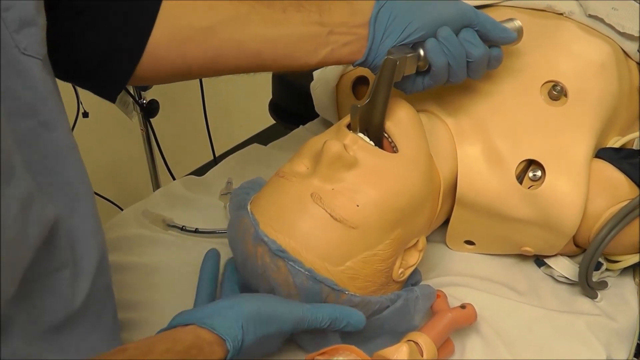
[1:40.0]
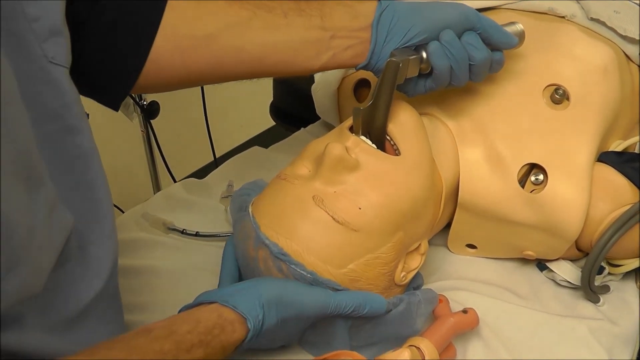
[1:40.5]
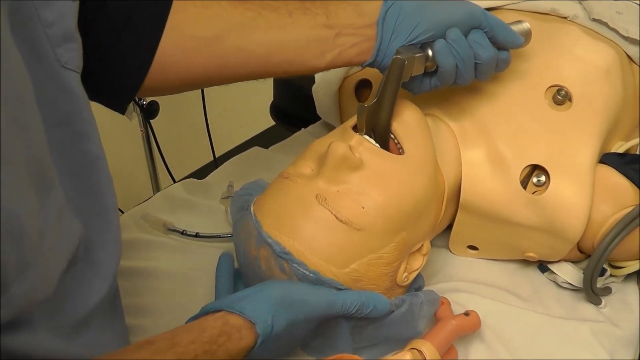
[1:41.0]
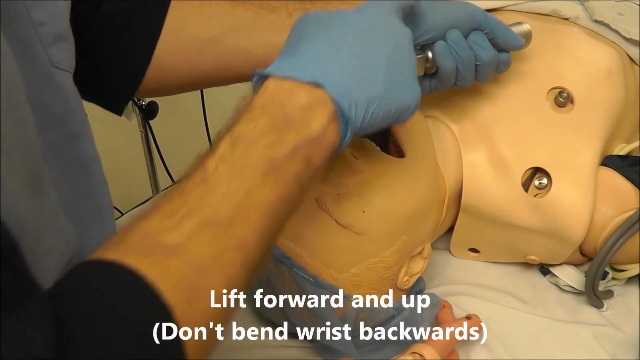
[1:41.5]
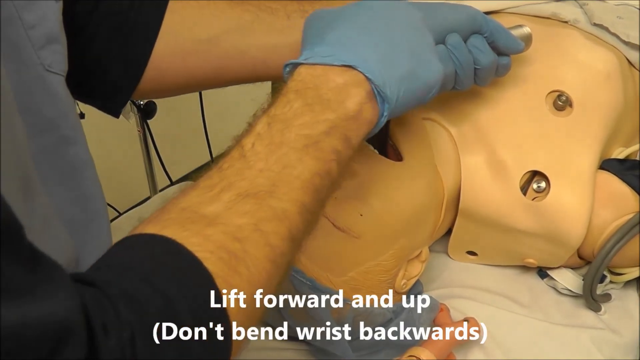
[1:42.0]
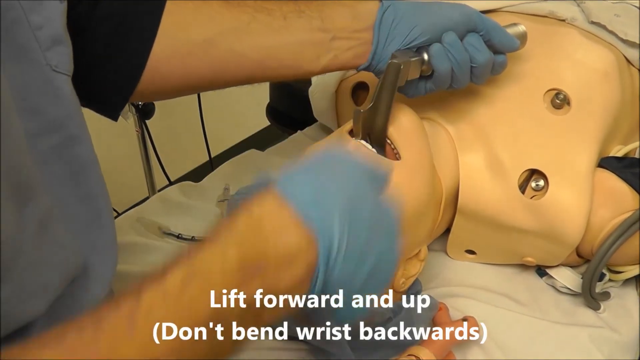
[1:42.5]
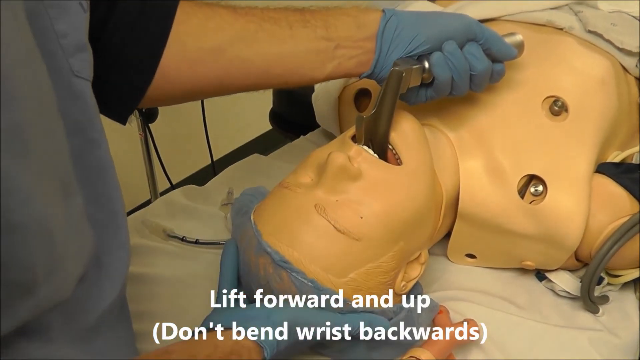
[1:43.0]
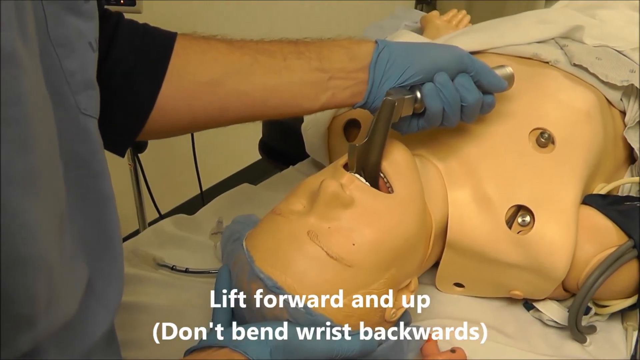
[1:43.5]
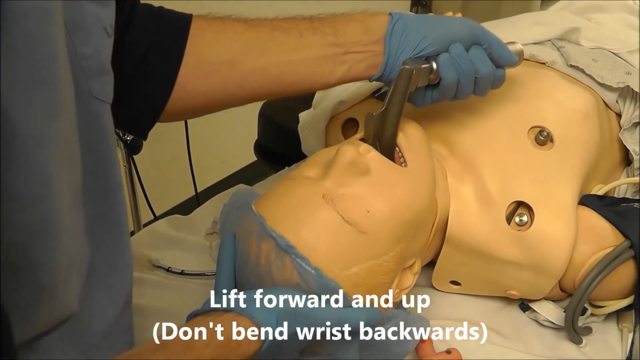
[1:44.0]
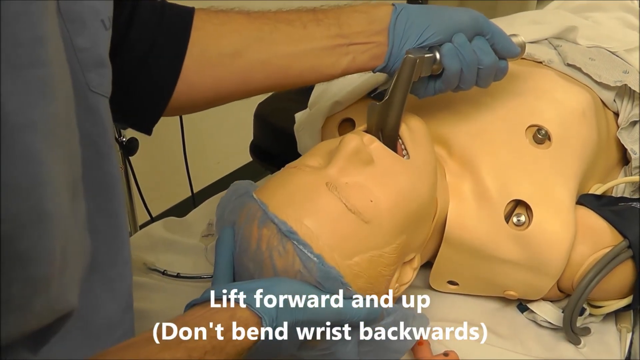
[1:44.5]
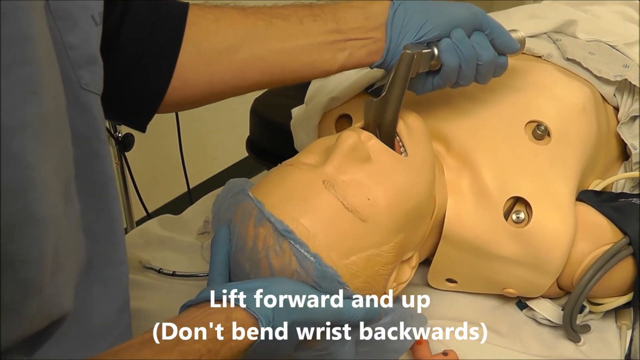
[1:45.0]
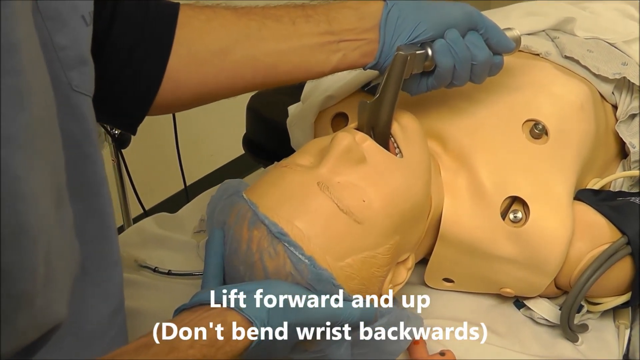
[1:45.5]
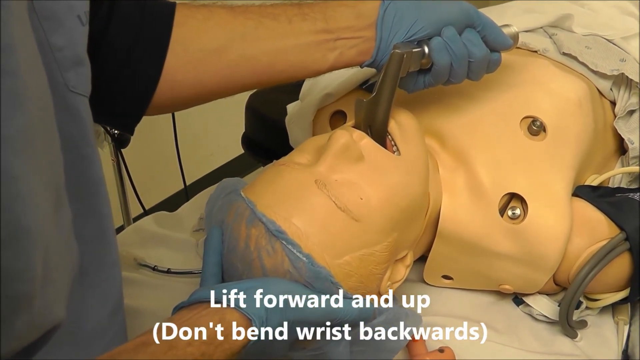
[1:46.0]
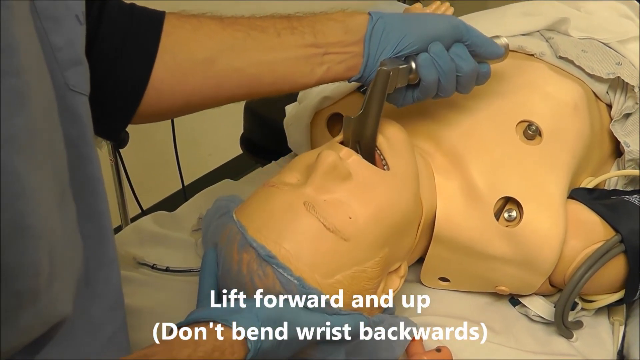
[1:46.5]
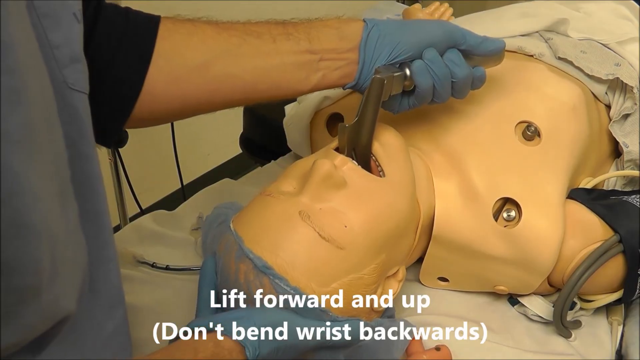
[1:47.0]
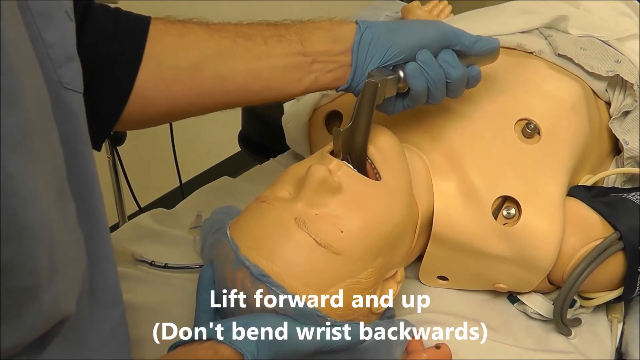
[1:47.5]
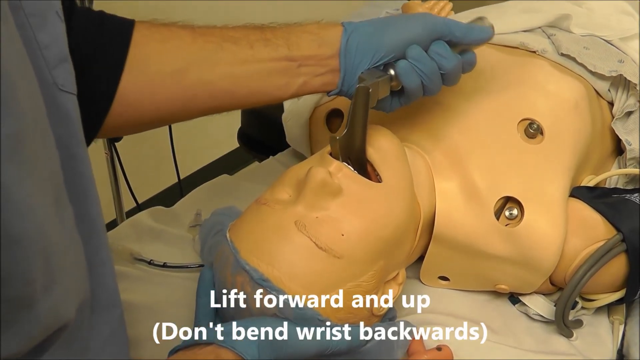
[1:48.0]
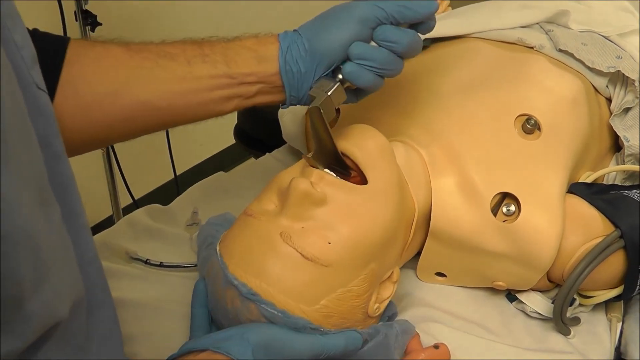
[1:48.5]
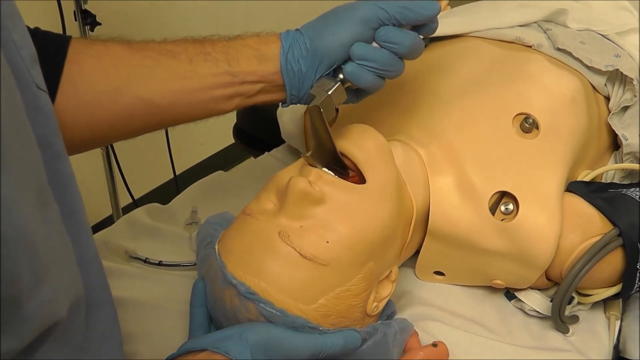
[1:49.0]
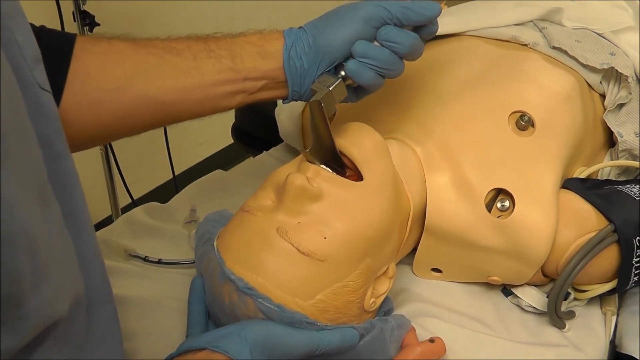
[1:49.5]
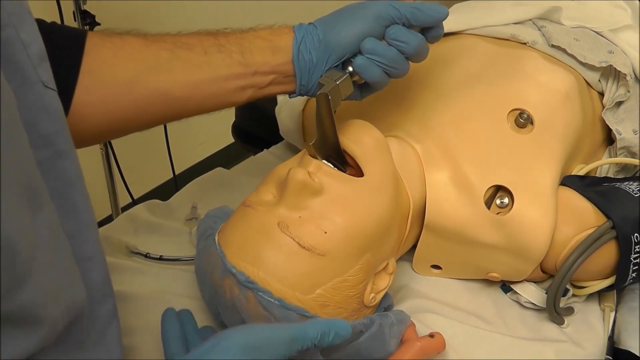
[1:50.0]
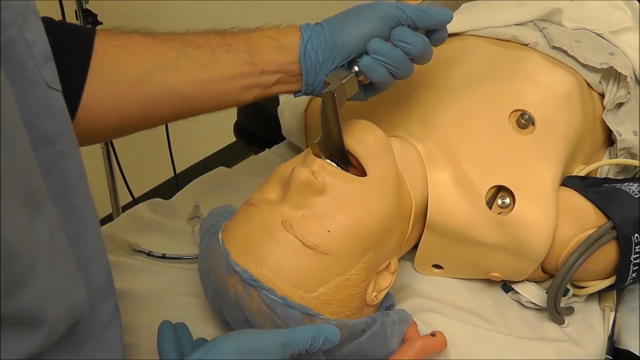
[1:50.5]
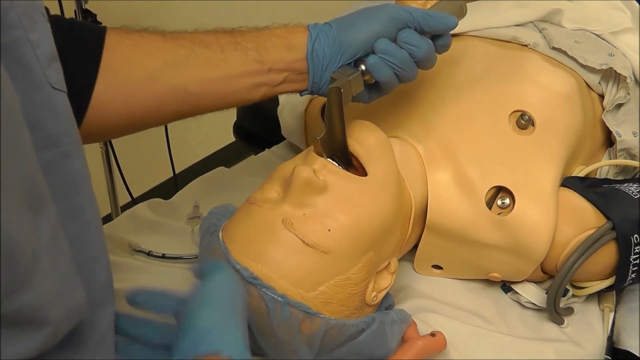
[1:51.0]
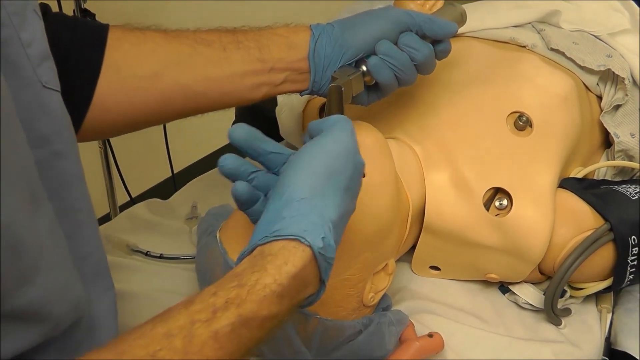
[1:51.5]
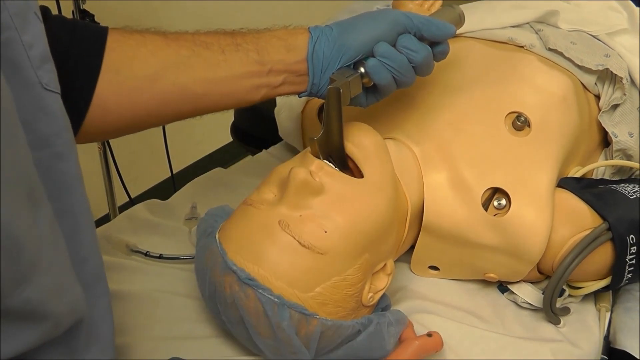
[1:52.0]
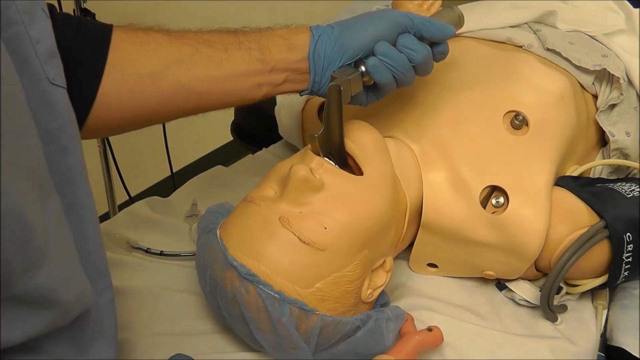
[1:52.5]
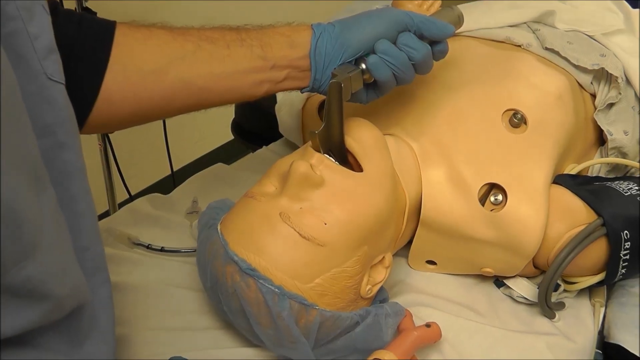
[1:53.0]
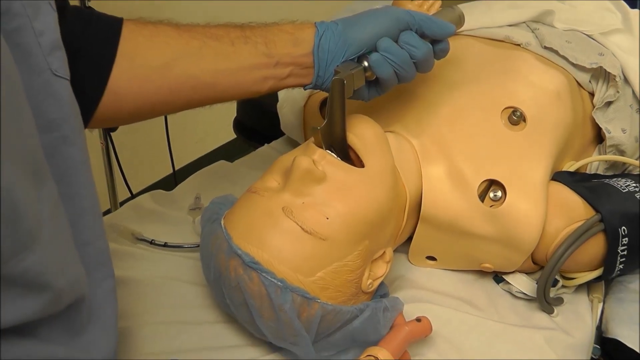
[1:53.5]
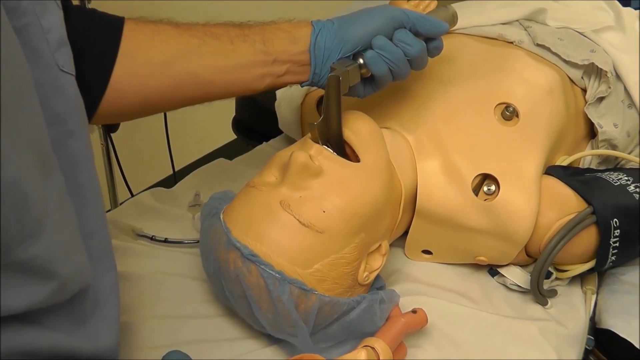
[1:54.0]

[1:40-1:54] The person performing the mac intubation on the dummy on the gurney has the instrument inserted into the dummy's mouth and uses it as leverage to pull up on the mouth, pulling the tongue forward. On-screen text reads "lift forward and up, don't bend wrist backwards." He puts his hand underneath the dummy's head while using the instrument to lift up and bring the tongue forward. The dummy has a blood pressure cup, three holes in its chest, teeth, an open mouth, closed eyes, hair netting on its head, and a gown that is part on and part off.